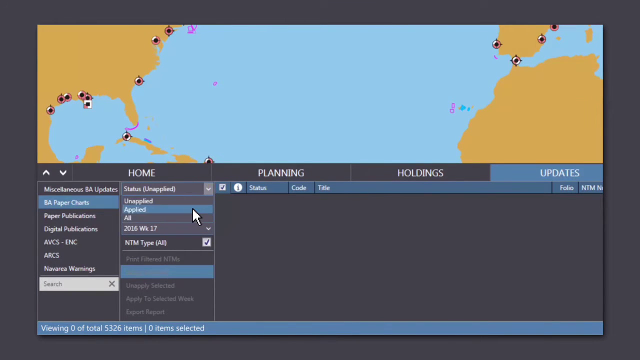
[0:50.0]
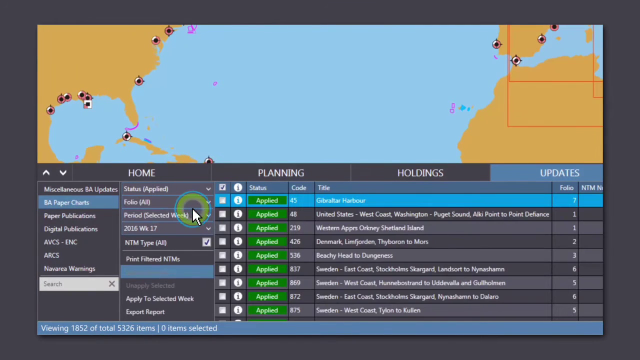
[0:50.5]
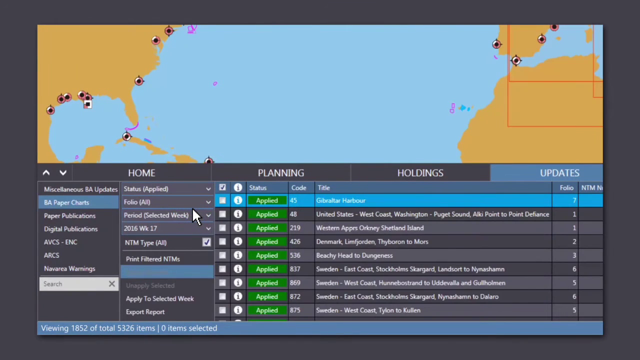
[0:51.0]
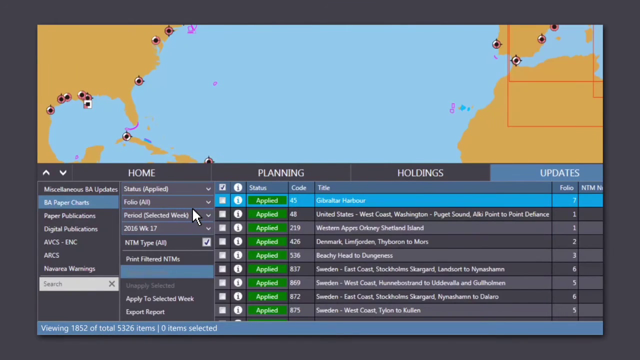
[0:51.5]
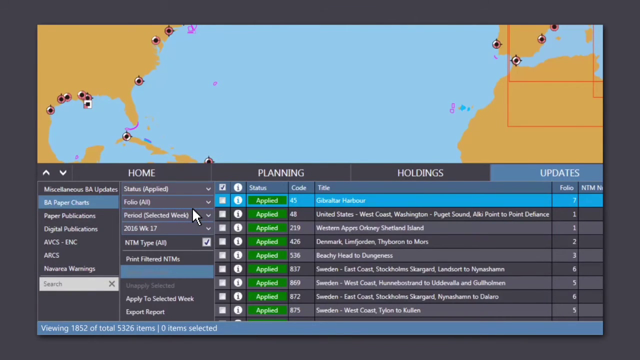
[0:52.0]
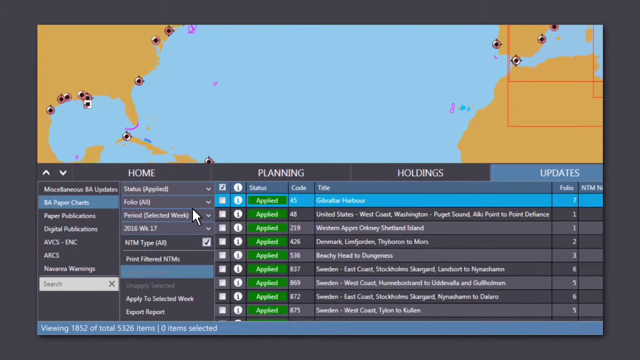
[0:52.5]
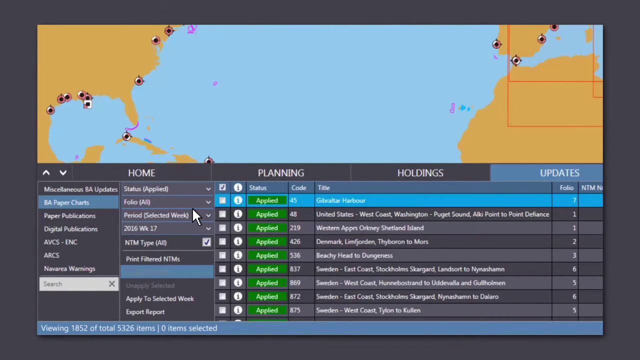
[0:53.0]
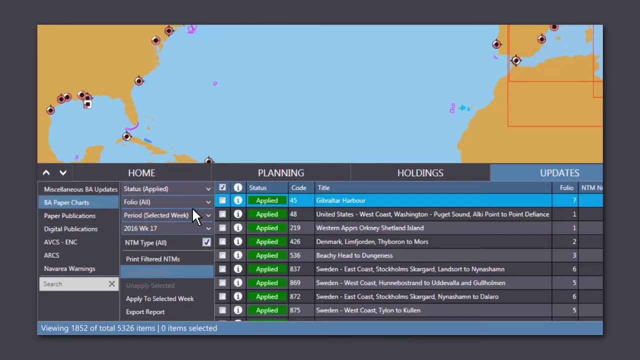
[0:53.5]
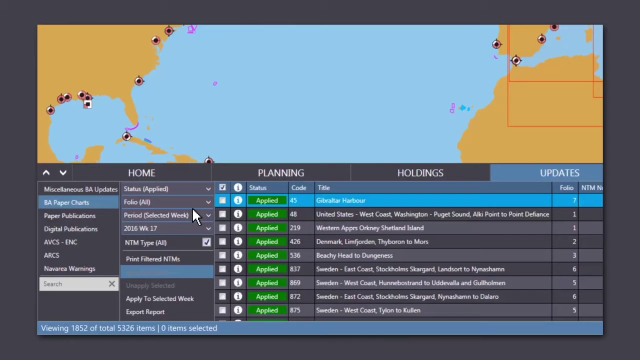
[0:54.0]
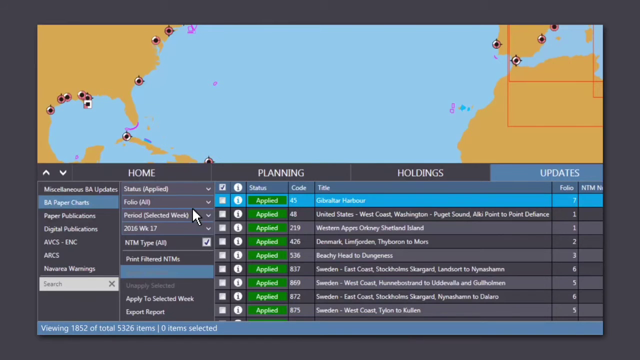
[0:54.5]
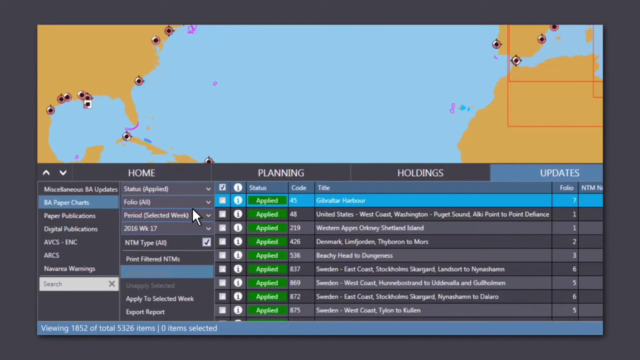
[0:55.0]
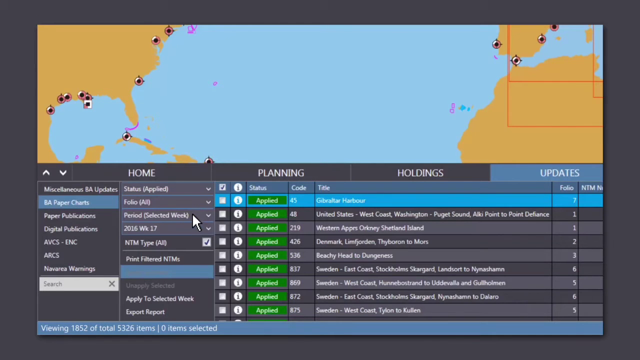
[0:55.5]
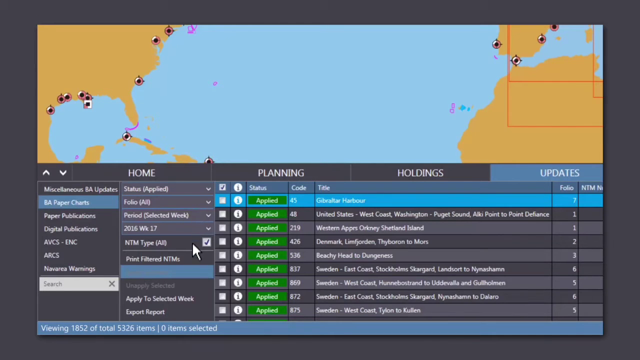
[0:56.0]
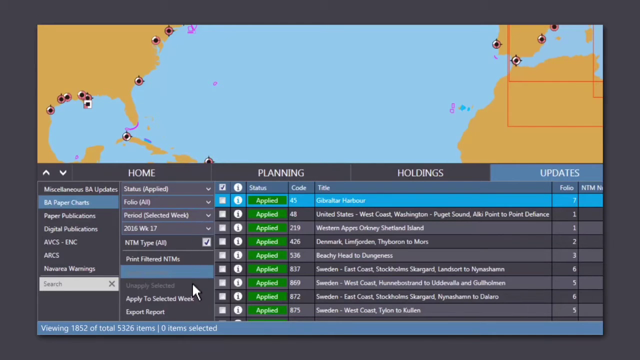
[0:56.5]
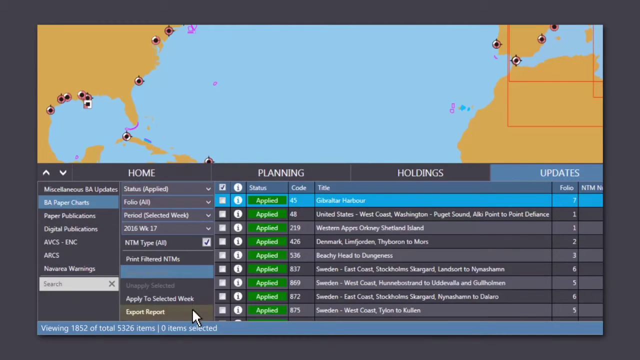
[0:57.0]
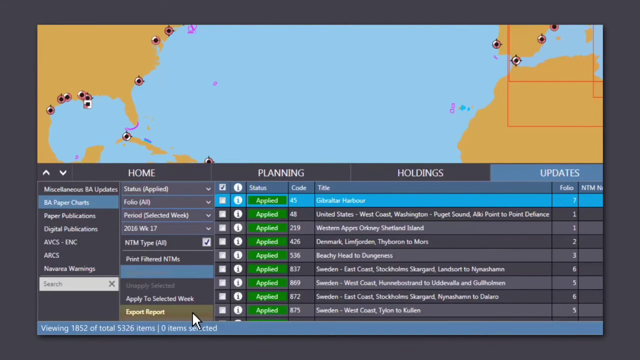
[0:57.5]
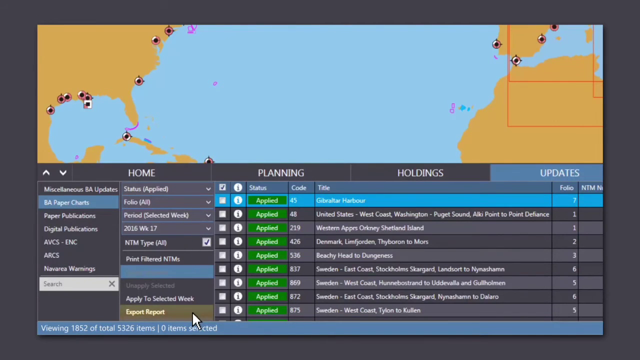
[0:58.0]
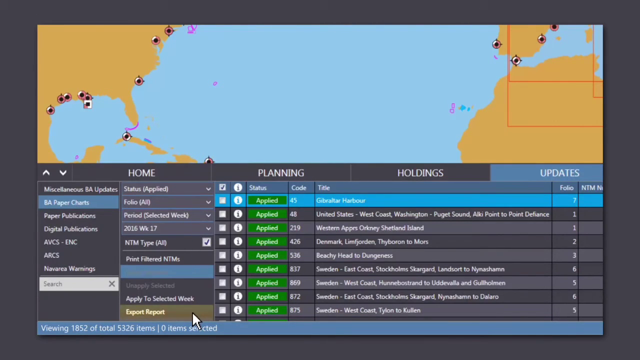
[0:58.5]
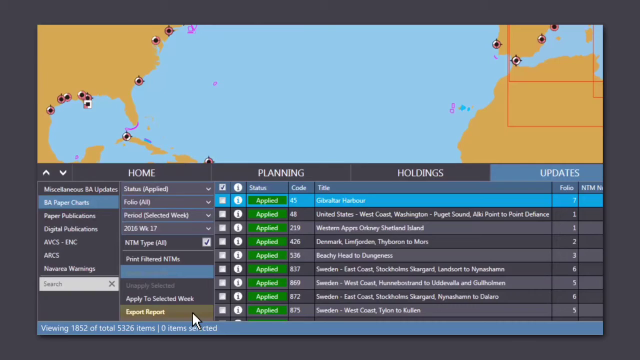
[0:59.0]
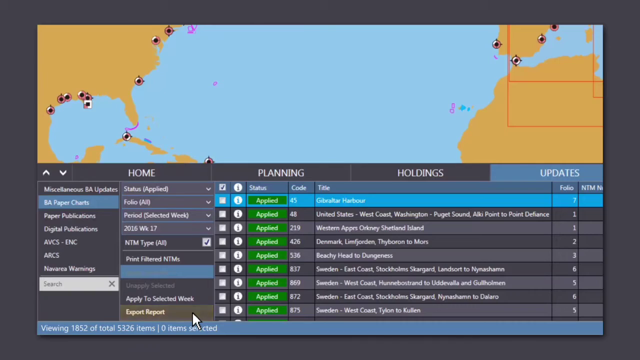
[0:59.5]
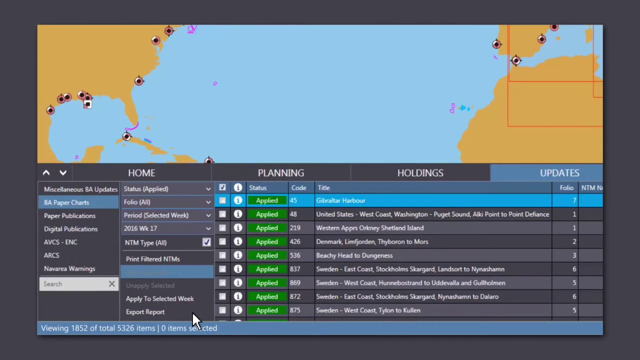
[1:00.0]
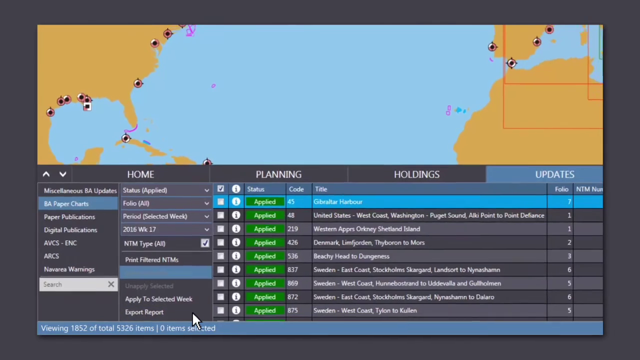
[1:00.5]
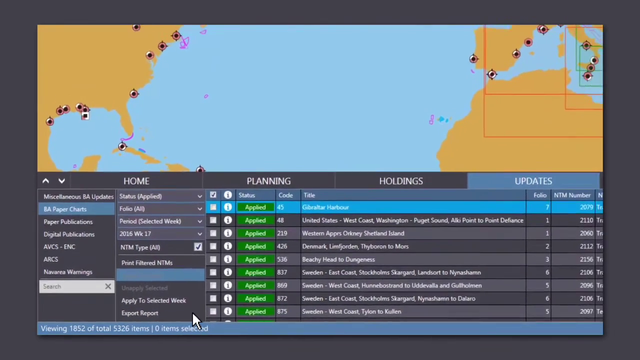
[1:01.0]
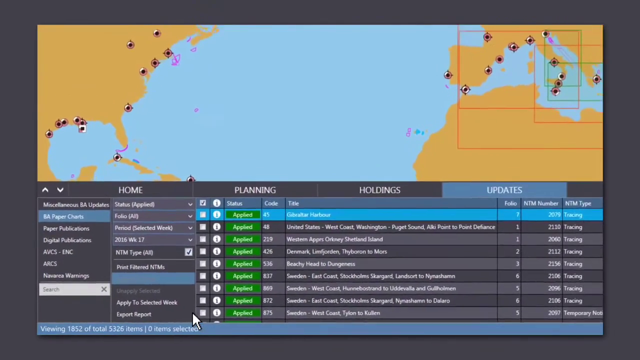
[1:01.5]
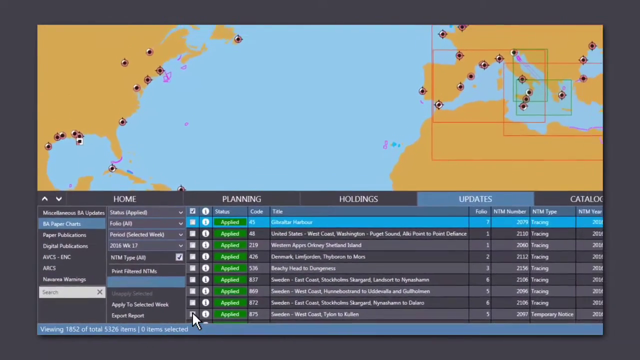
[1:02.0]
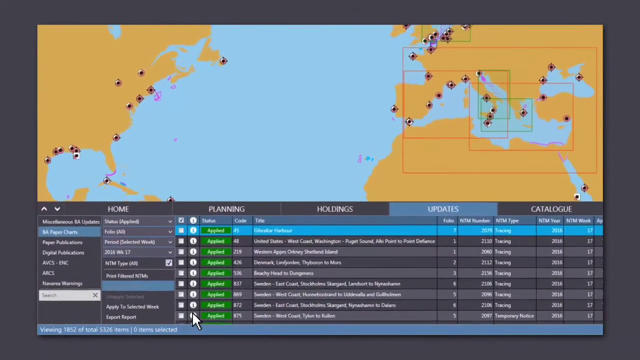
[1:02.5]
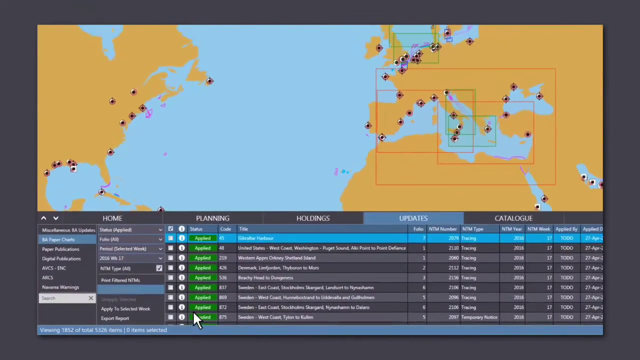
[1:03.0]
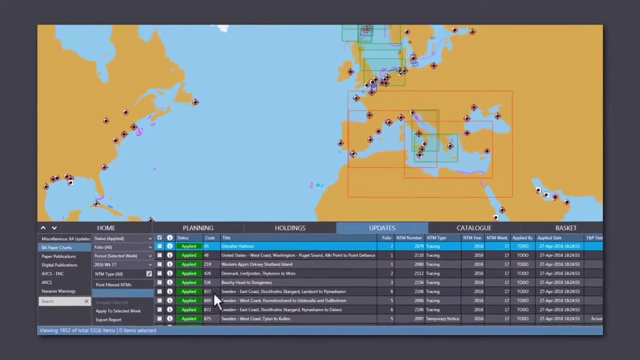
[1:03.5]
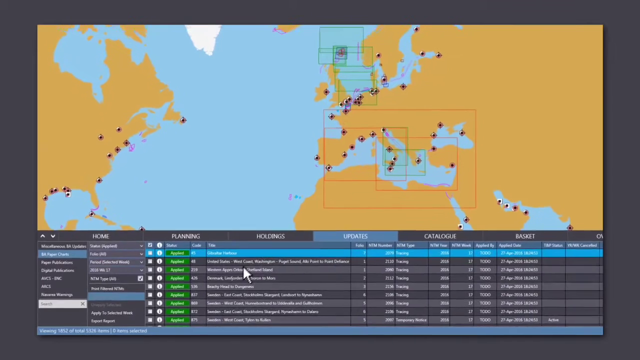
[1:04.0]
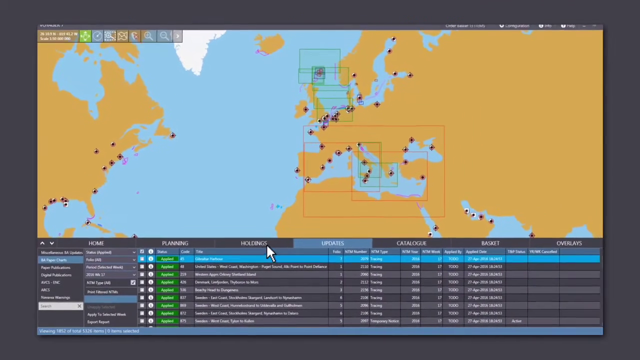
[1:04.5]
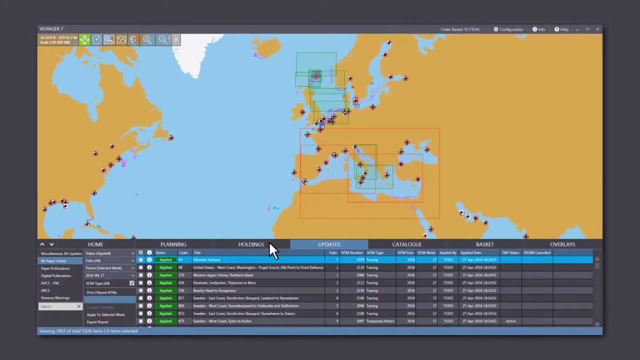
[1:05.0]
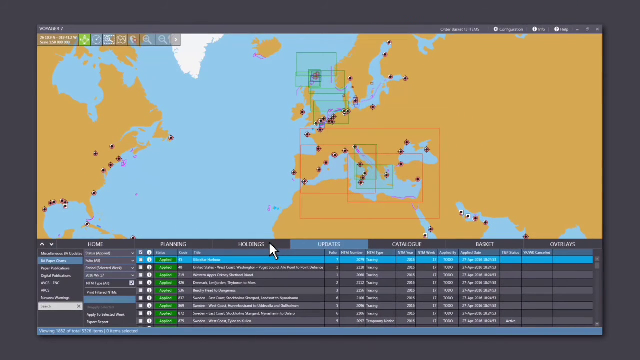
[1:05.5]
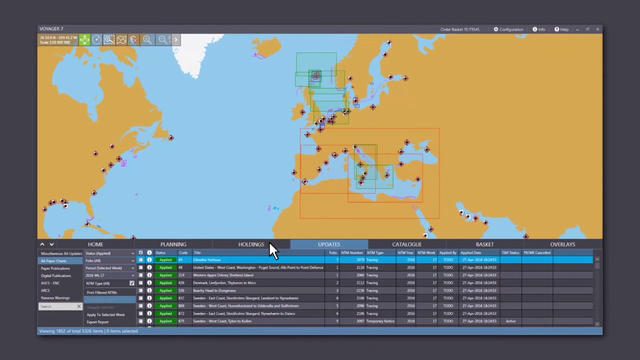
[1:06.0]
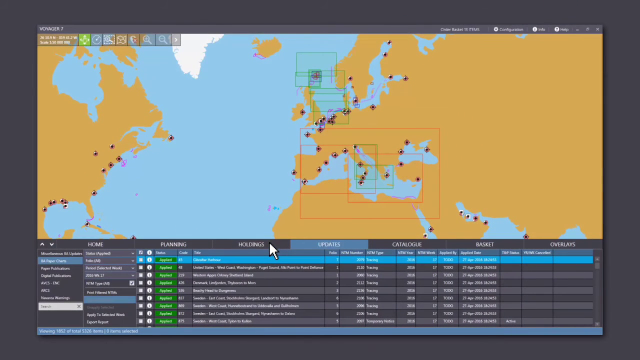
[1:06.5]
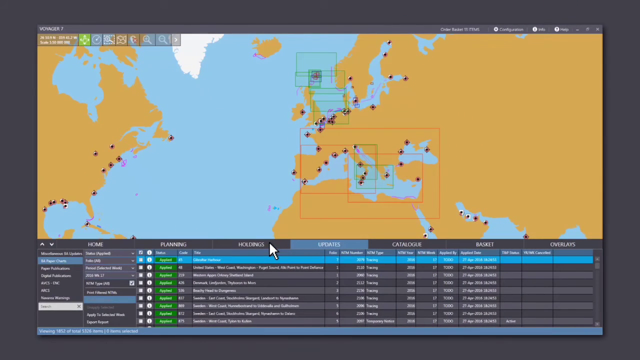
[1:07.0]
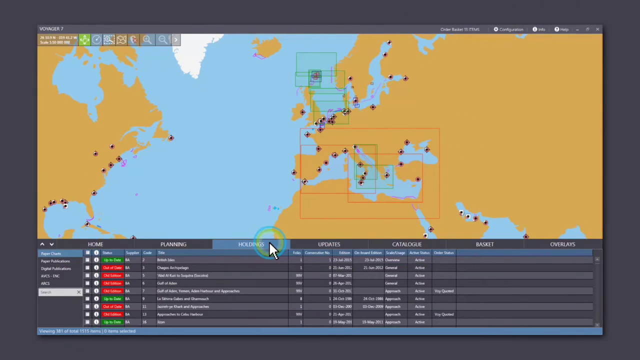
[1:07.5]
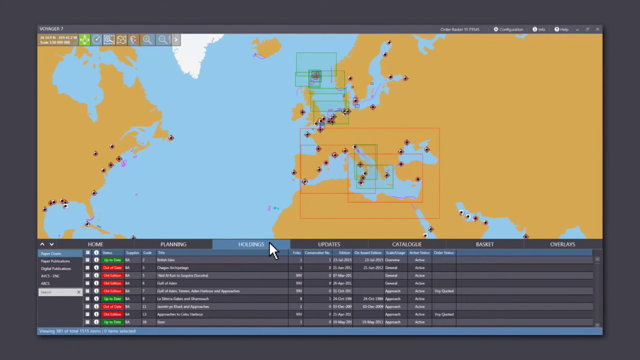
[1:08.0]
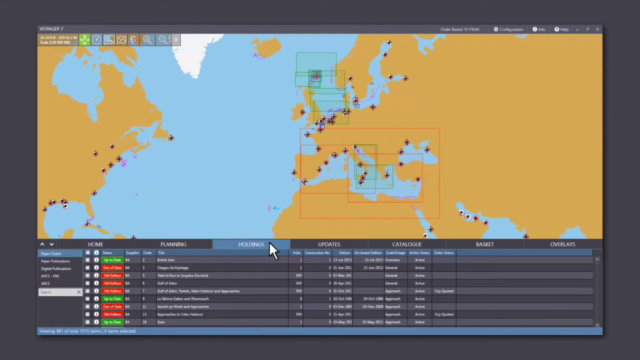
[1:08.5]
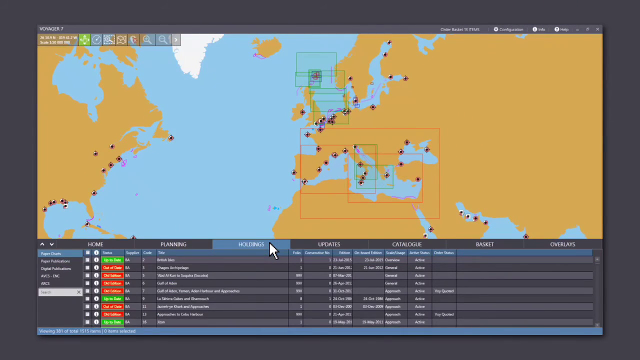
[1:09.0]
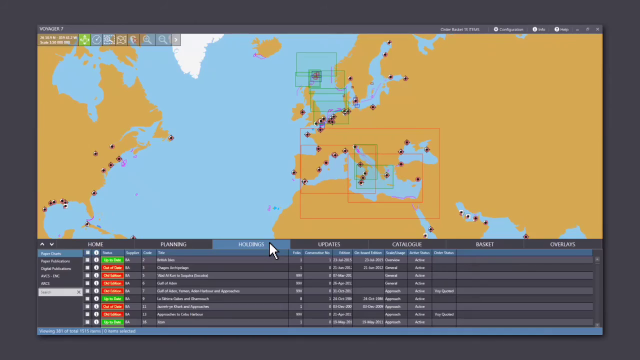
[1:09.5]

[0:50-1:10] The screen shows all of the applied NTMs, still green, along with the map. The cursor moves down to export report and clicks on it. The view then moves out to show more of the entire screen and more of the map, which has little pins in different areas and red and green squares, while still under Updates. The cursor then moves to Holdings and the arrow taps on it. A mixture of green and red appears, with up-to-date and out-of-date labels, and the view backs out to show a great deal more.